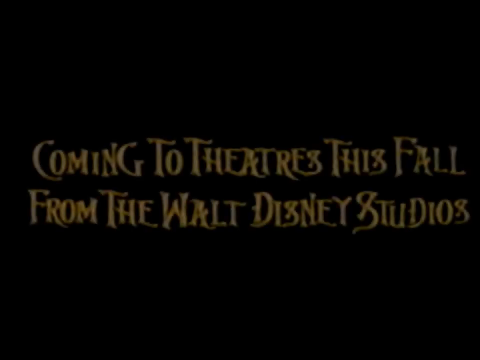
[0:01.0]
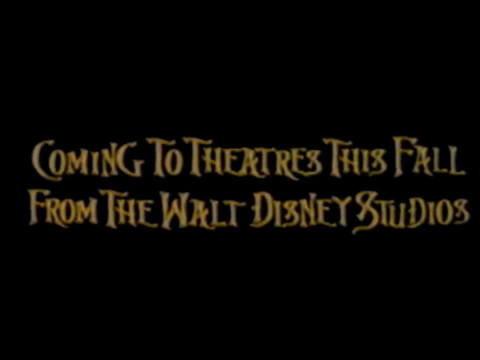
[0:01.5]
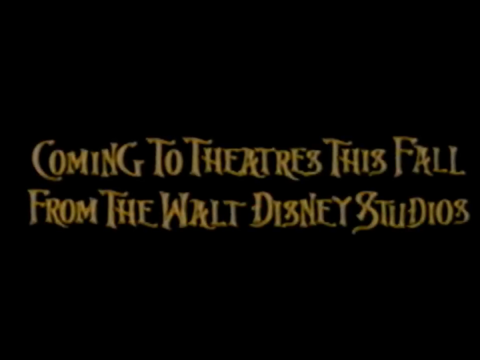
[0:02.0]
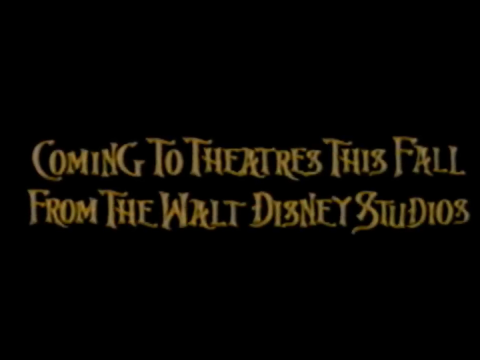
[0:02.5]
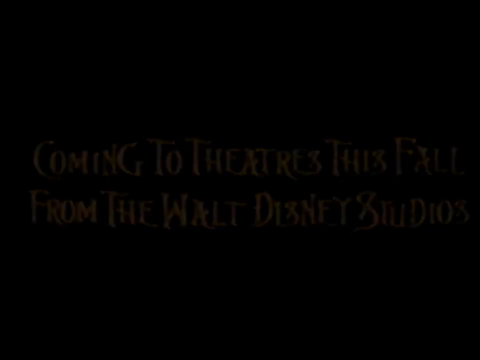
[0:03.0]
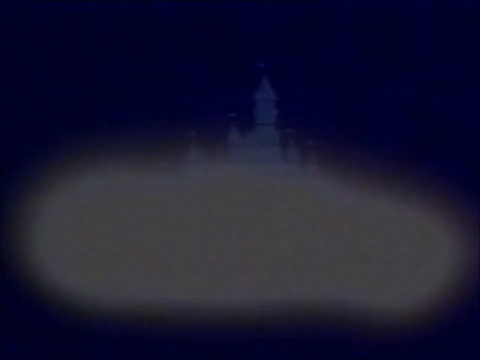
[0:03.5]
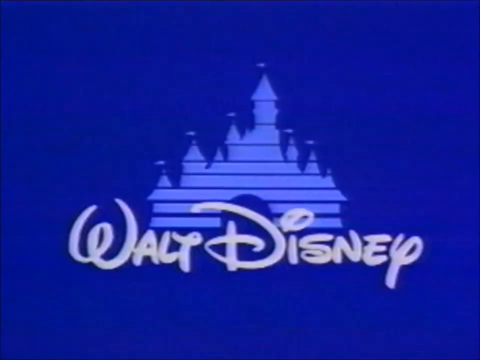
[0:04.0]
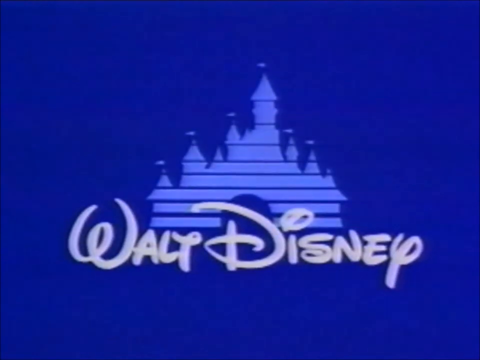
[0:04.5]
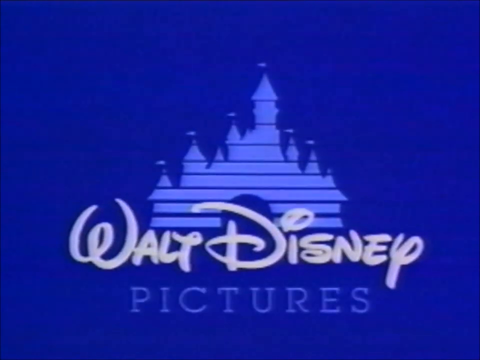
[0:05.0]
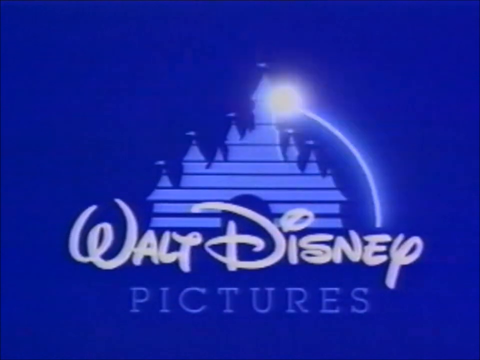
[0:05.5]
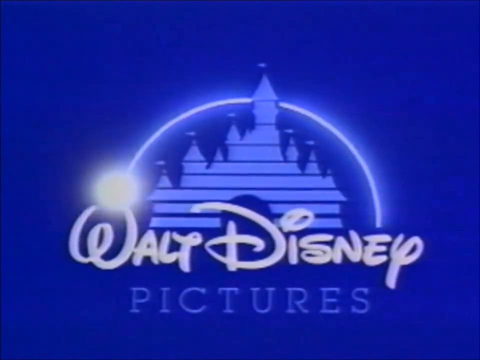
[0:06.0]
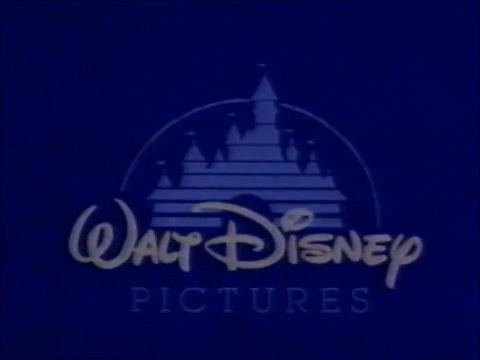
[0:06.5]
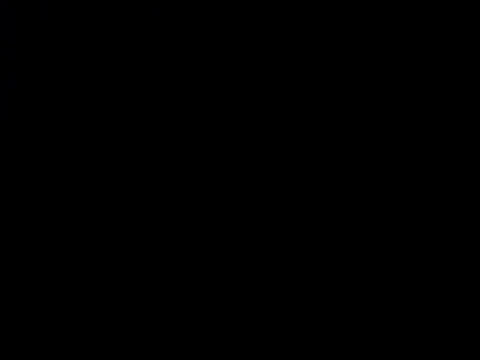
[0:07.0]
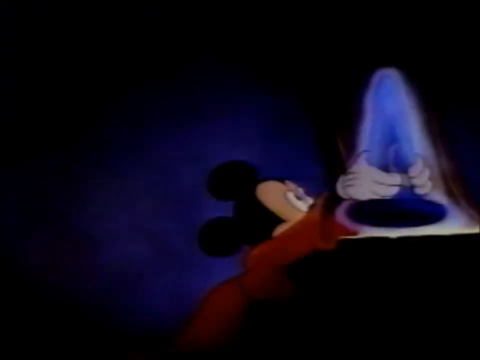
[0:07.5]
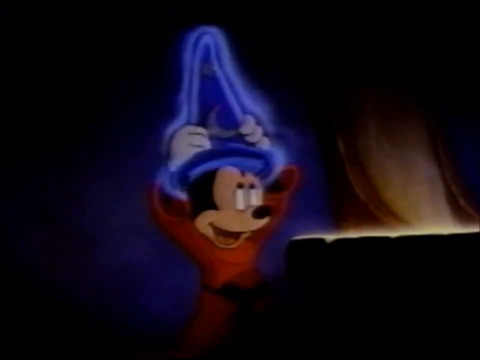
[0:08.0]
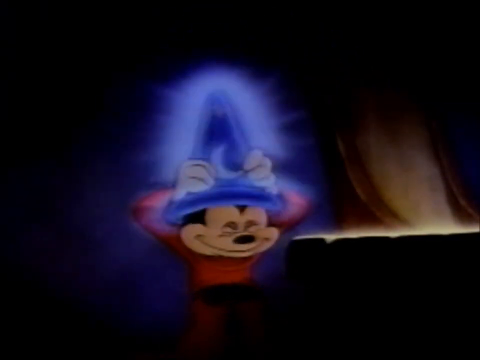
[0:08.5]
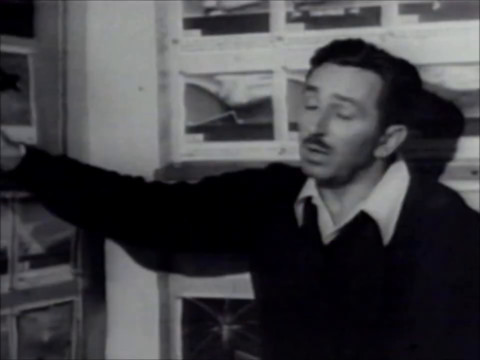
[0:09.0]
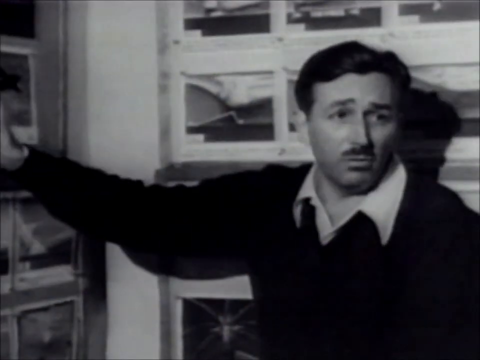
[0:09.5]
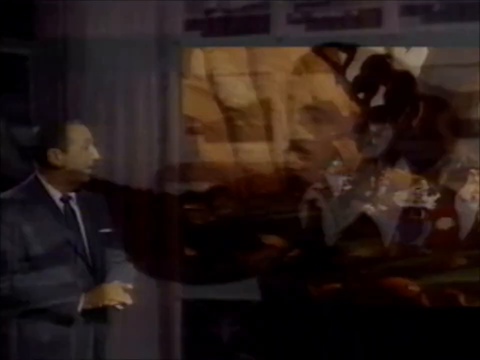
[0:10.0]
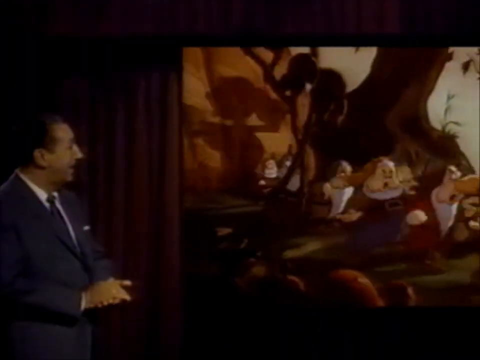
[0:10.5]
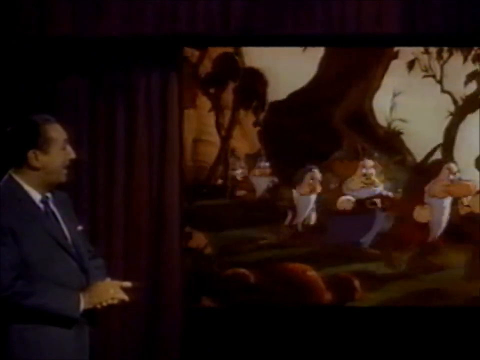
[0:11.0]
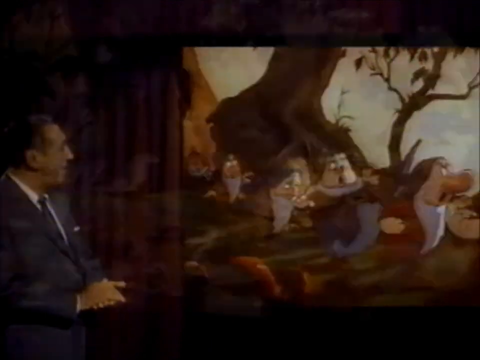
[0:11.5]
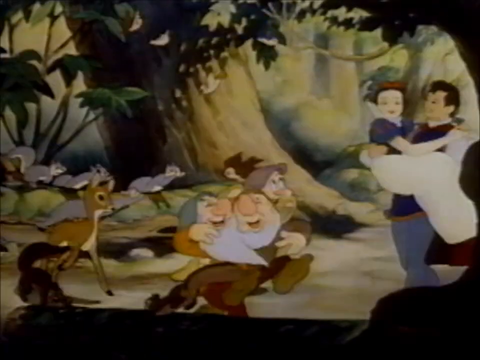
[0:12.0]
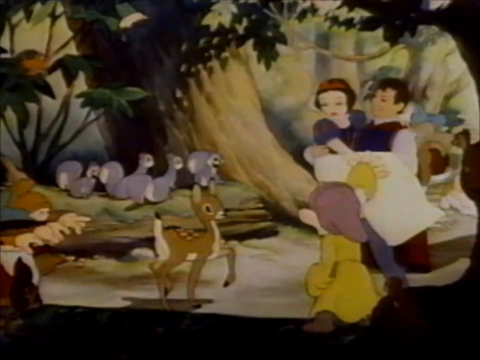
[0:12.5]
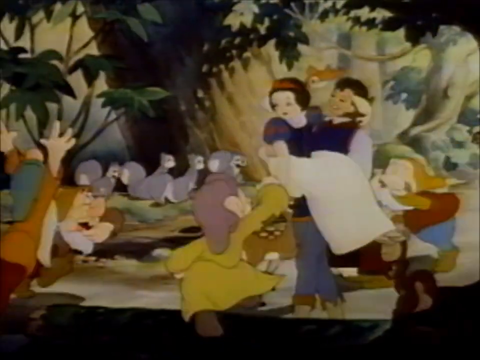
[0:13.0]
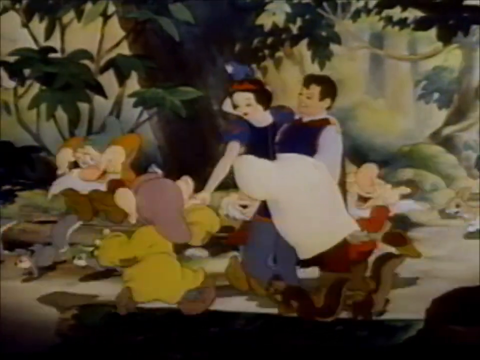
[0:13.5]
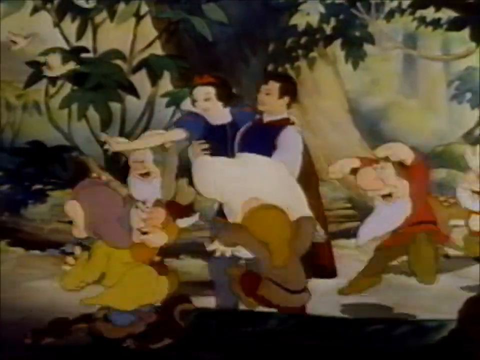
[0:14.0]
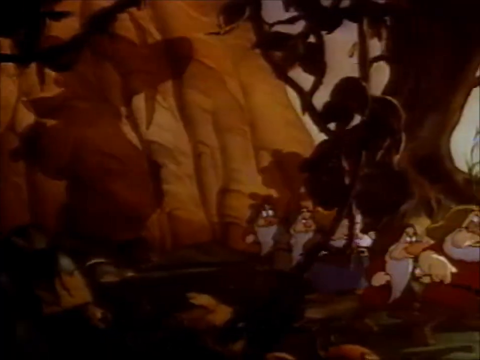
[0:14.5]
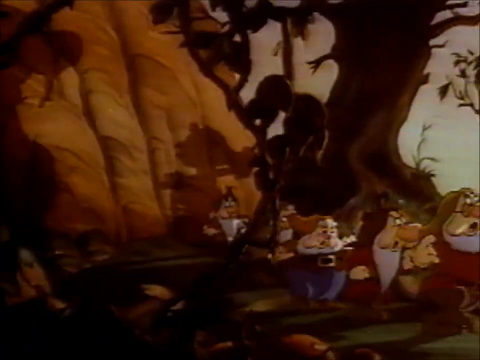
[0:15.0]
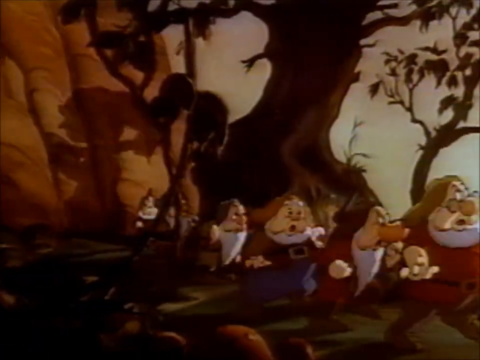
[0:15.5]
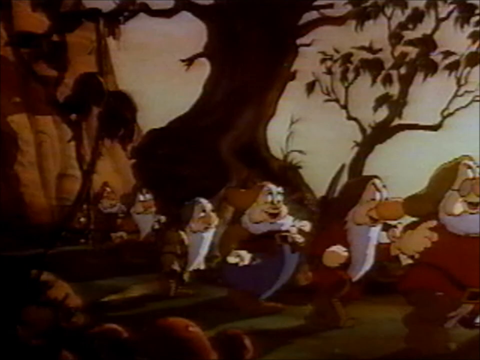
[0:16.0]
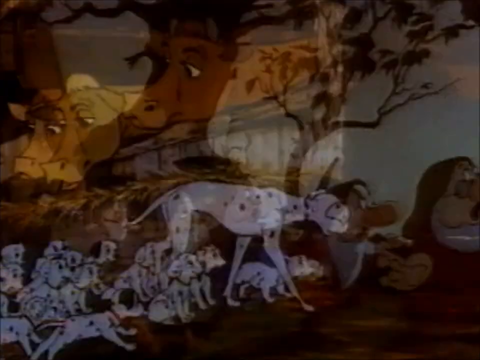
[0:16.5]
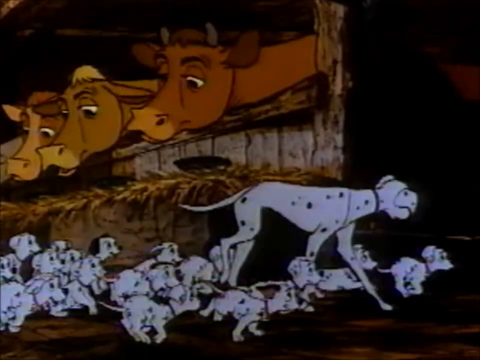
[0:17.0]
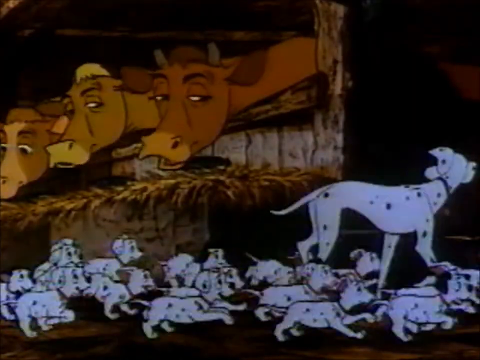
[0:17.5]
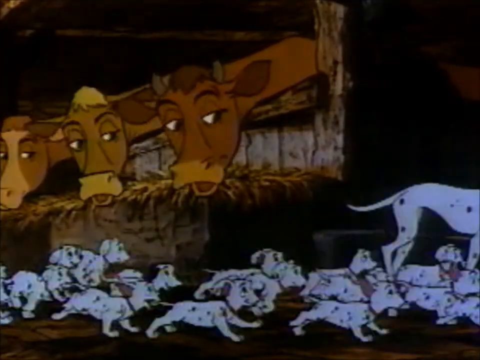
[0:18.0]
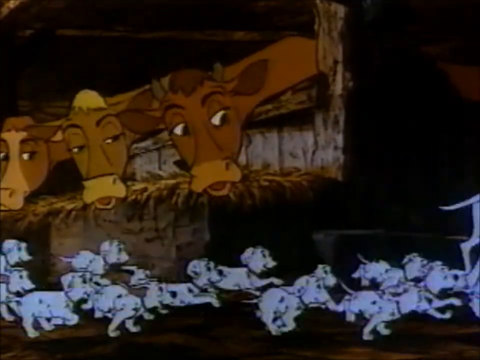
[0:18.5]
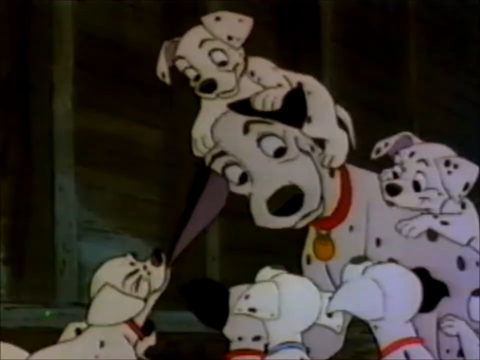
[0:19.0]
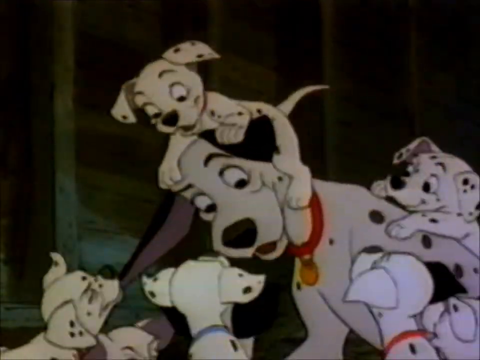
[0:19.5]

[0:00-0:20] On a black background, the words "Coming to theaters this fall from the Walt Disney Studios" fade in, written in a stylized, fairytale-esque yellow font. The text quickly fades back out and the scene transitions to the Walt Disney Pictures opening, featuring its prominent logo and castle background. After a brief delay this fades out as well, revealing VHS footage of Mickey Mouse wearing red robes, picking up a wizard's hat and placing it on his head. The scene quickly switches to black and white footage of Walt Disney pointing at a picture on the wall. This transitions to a man watching a large screen depicting footage from Snow White and the Seven Dwarves, with the Seven Dwarves briefly marching across the screen. The scene then zooms in to show only the footage, this time Snow White being held by the Prince while the Dwarves dance around them. Next comes footage from 101 Dalmatians: three cows are in a stable, and one adult Dalmatian and several Dalmatian pups run across the screen.